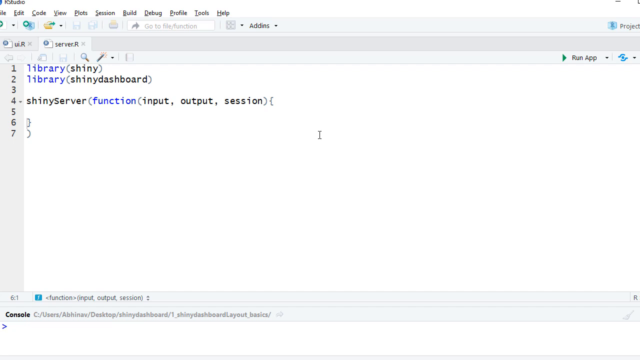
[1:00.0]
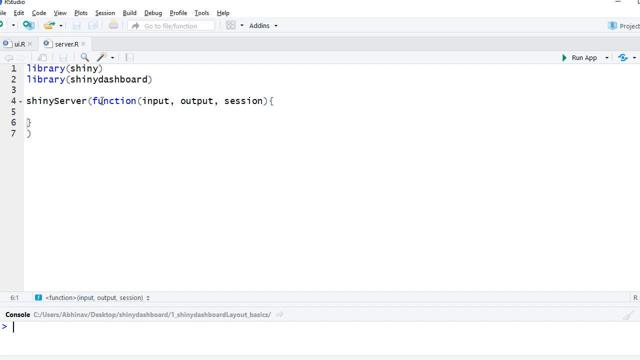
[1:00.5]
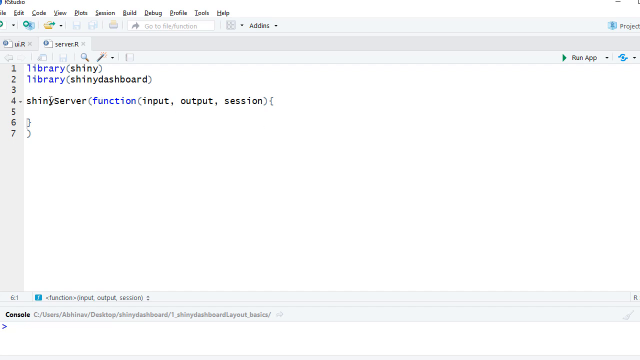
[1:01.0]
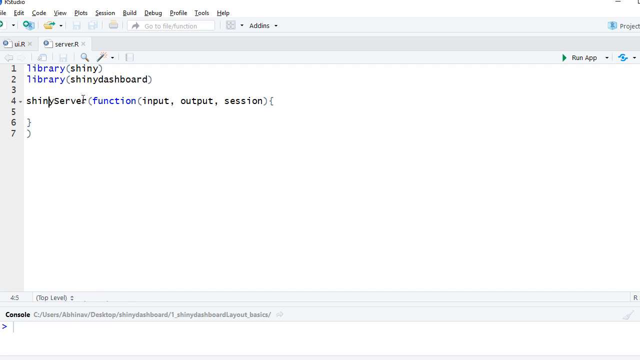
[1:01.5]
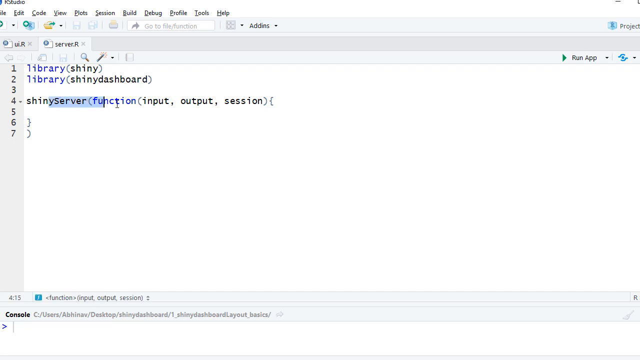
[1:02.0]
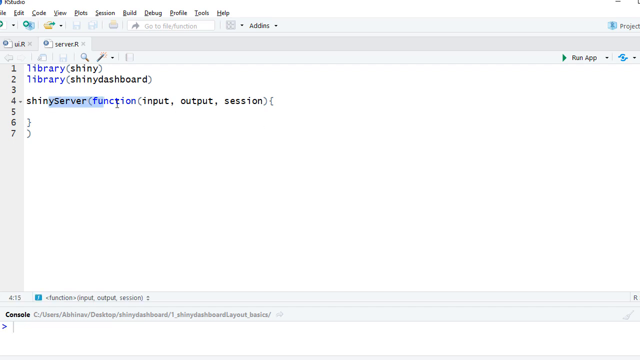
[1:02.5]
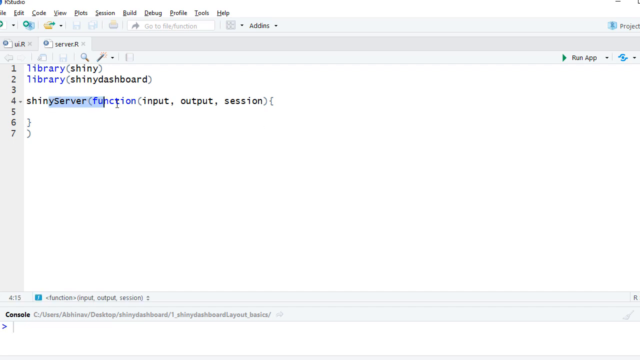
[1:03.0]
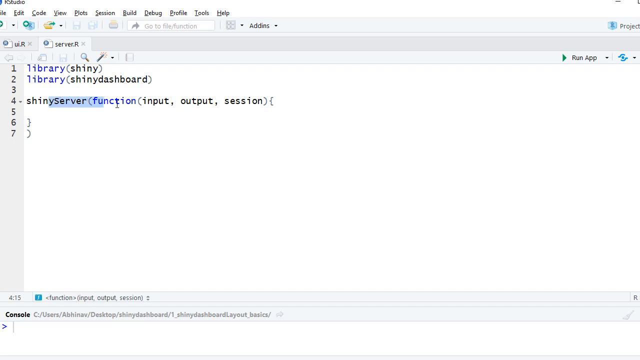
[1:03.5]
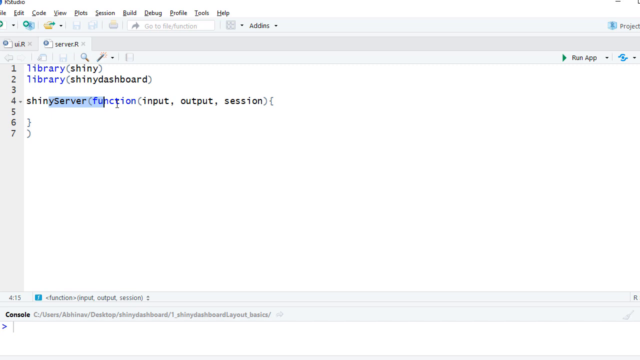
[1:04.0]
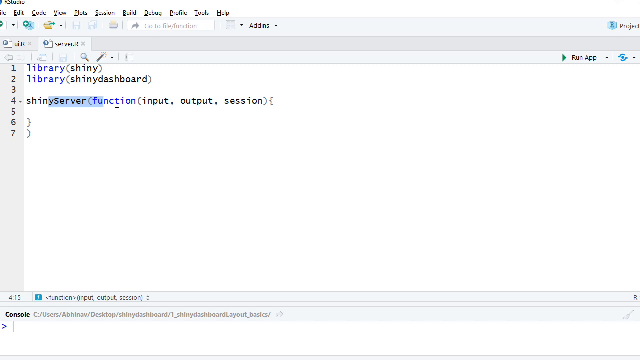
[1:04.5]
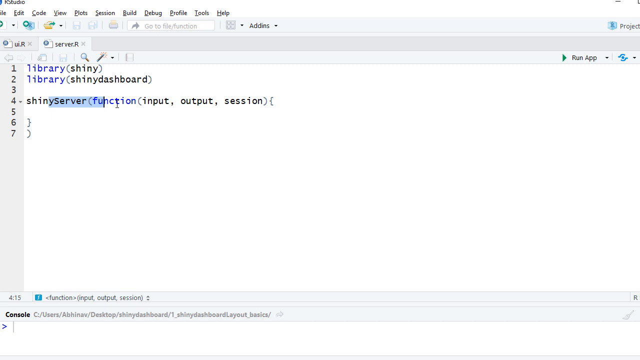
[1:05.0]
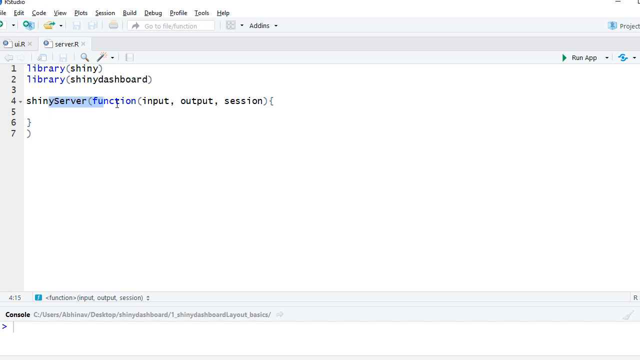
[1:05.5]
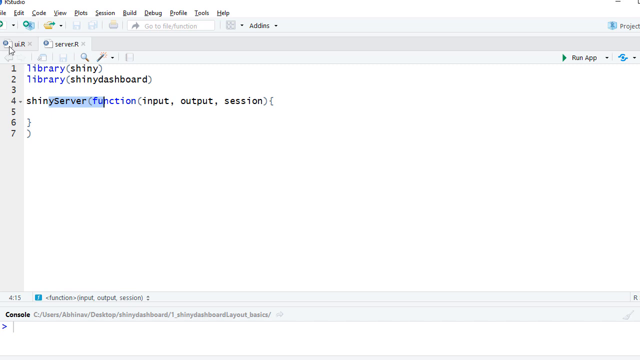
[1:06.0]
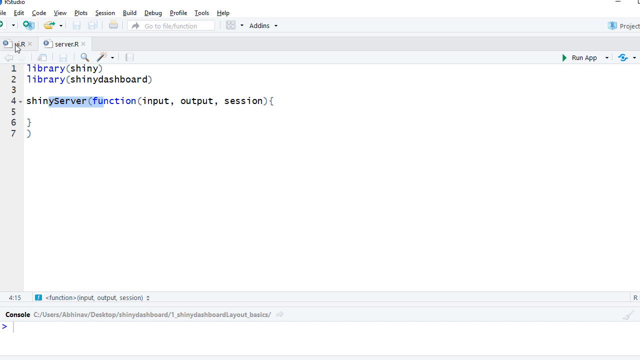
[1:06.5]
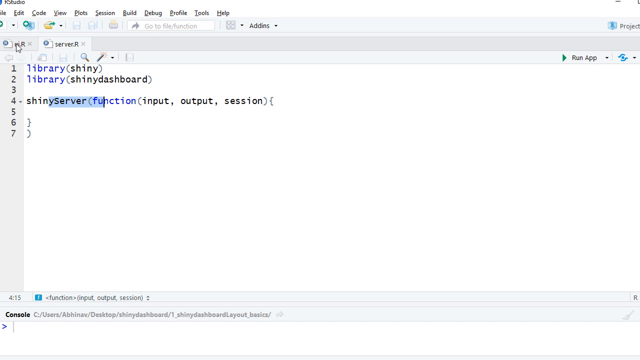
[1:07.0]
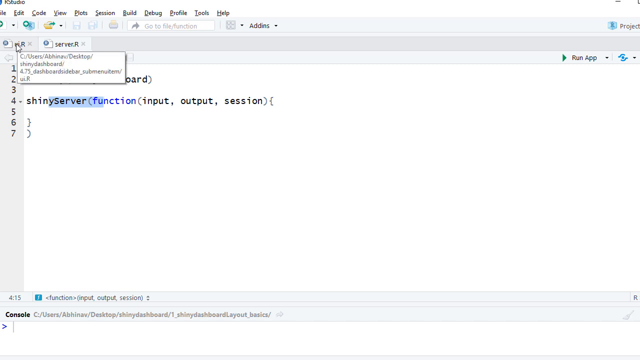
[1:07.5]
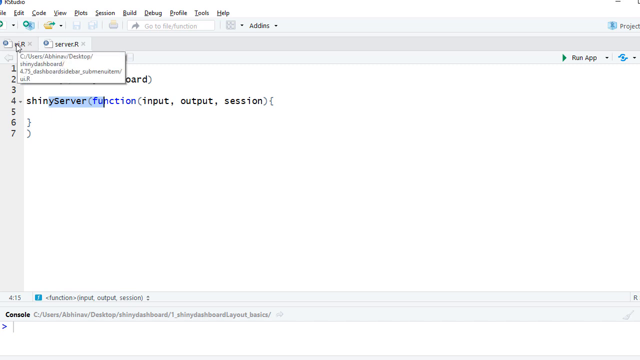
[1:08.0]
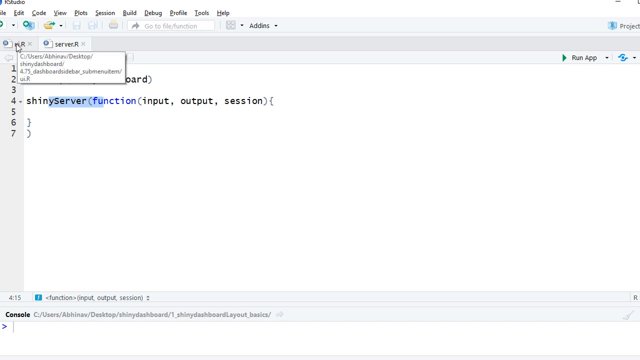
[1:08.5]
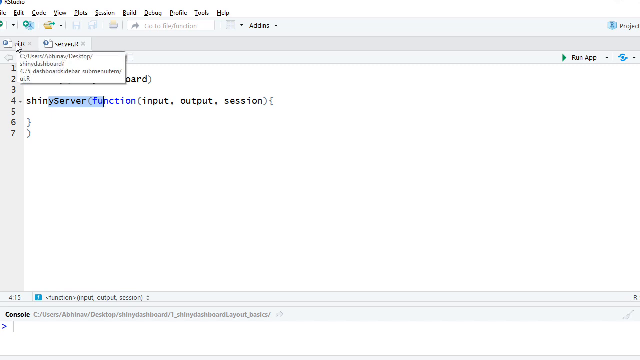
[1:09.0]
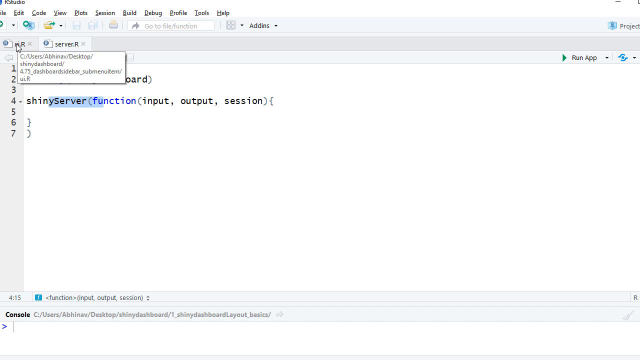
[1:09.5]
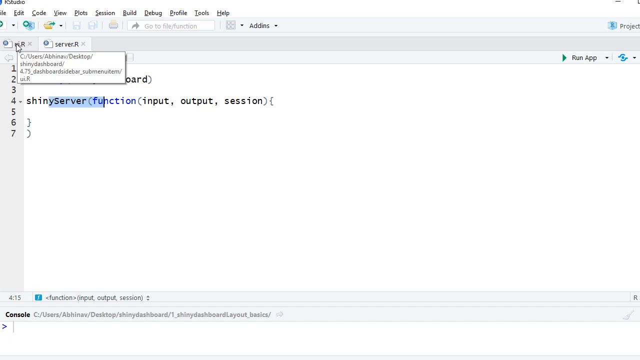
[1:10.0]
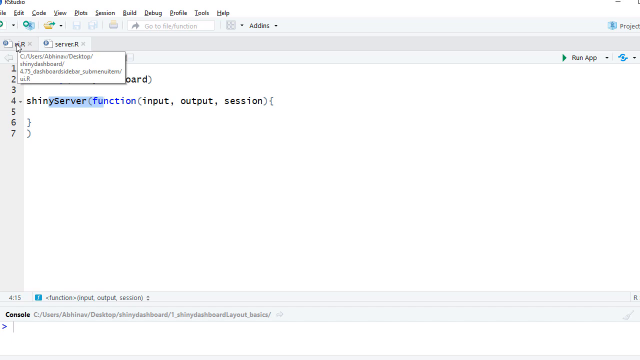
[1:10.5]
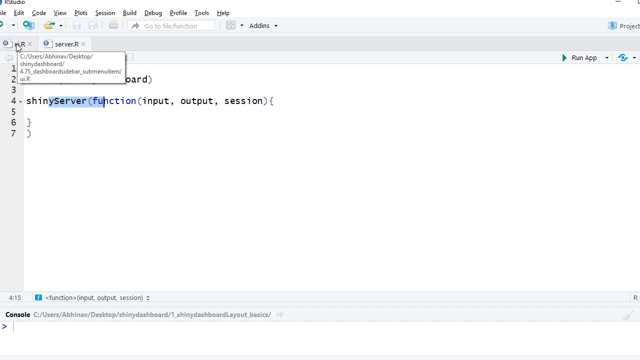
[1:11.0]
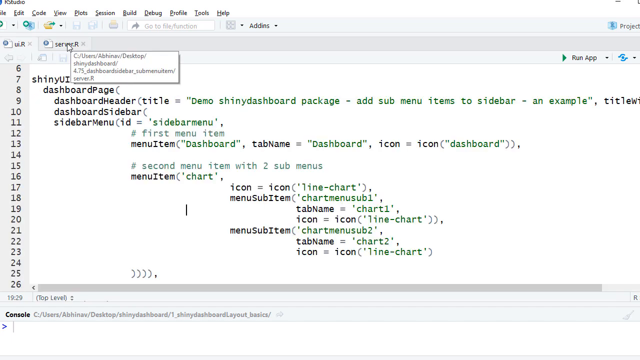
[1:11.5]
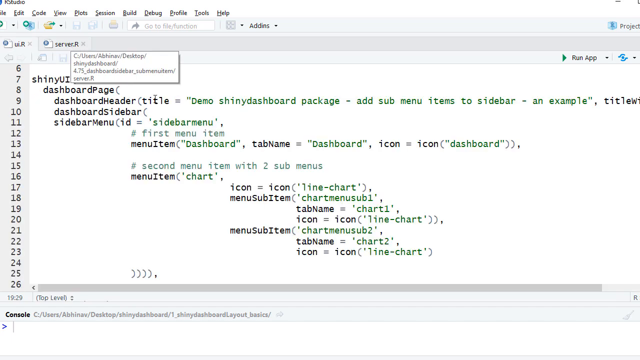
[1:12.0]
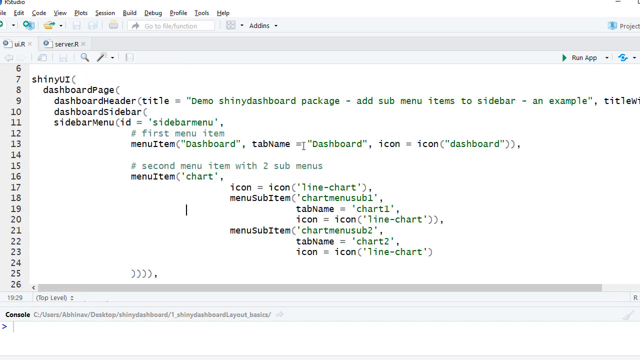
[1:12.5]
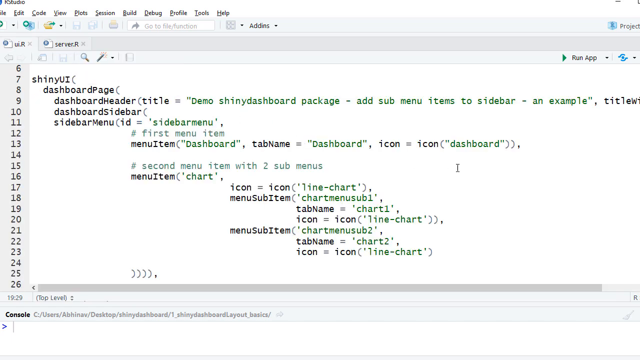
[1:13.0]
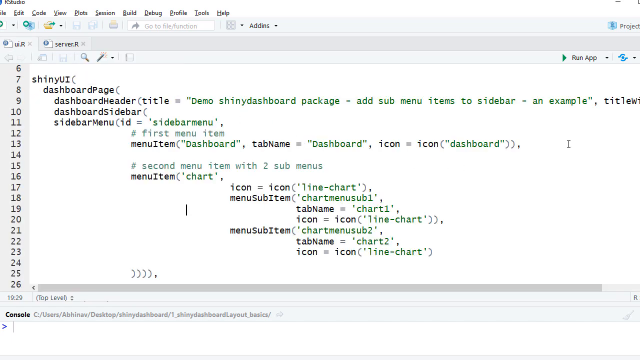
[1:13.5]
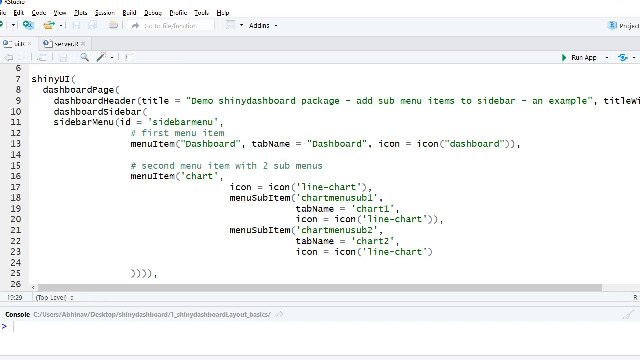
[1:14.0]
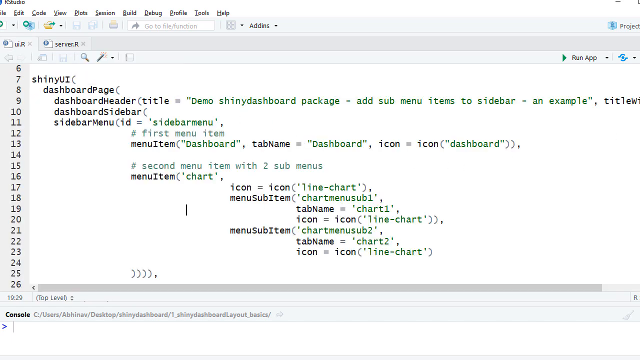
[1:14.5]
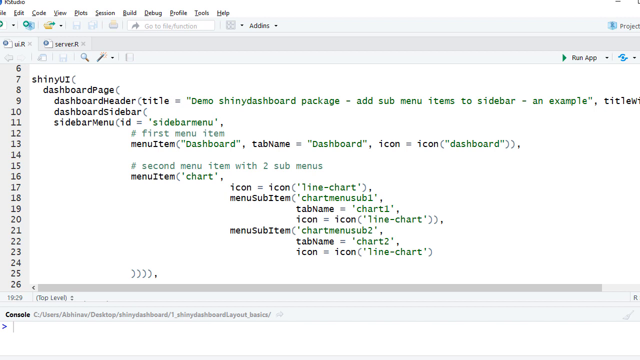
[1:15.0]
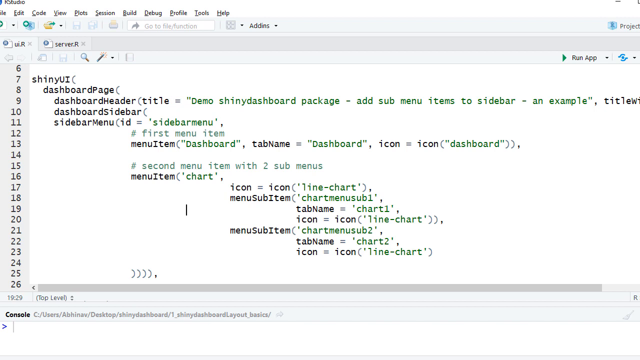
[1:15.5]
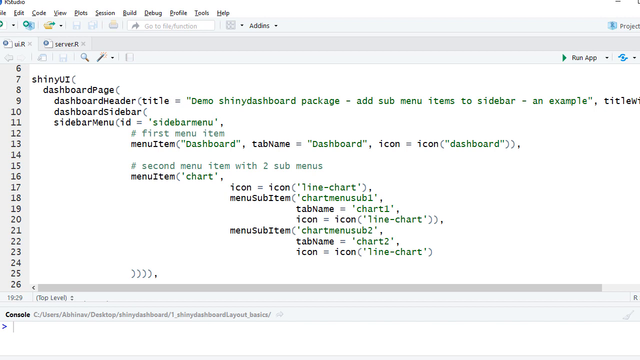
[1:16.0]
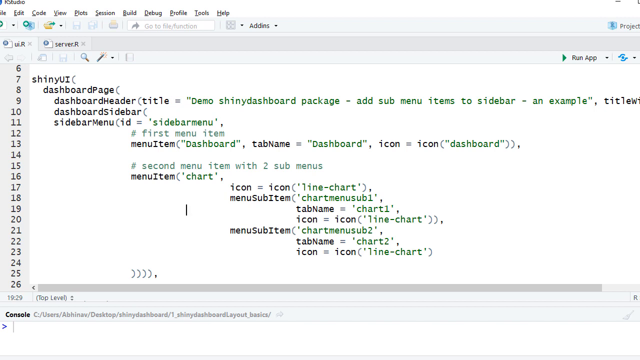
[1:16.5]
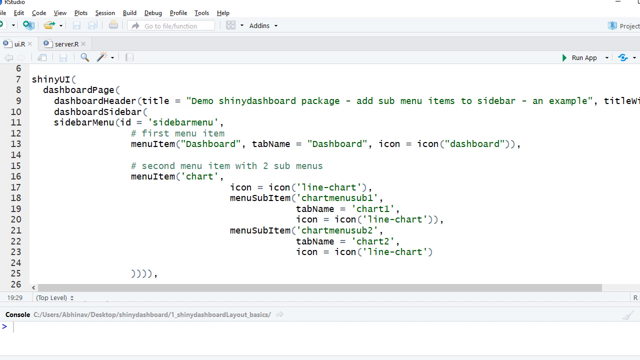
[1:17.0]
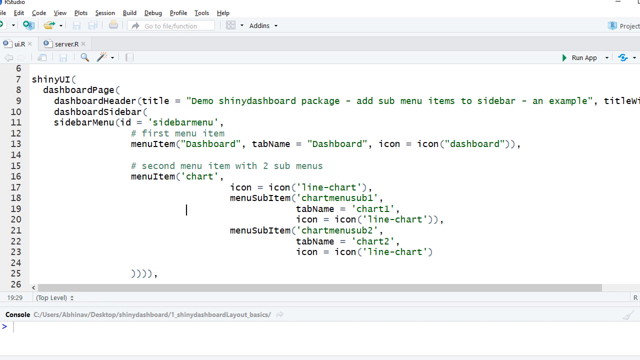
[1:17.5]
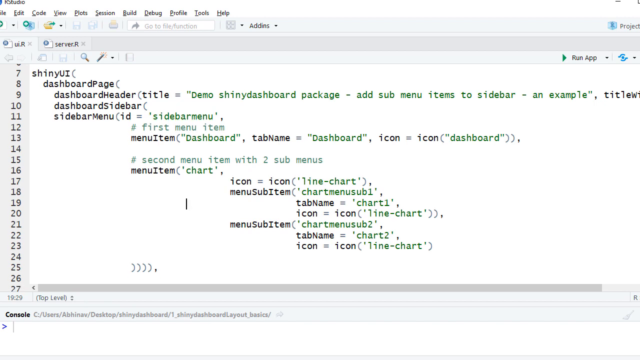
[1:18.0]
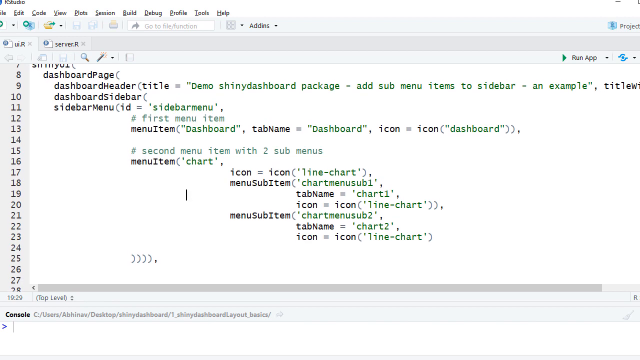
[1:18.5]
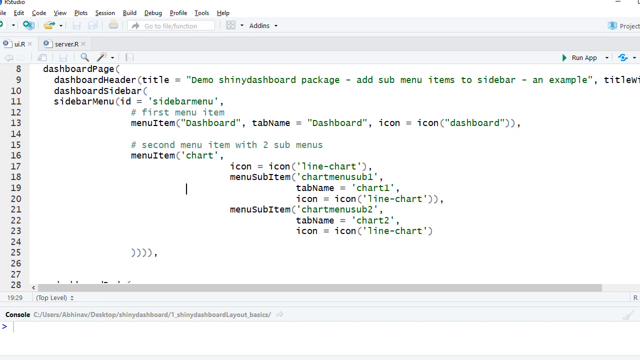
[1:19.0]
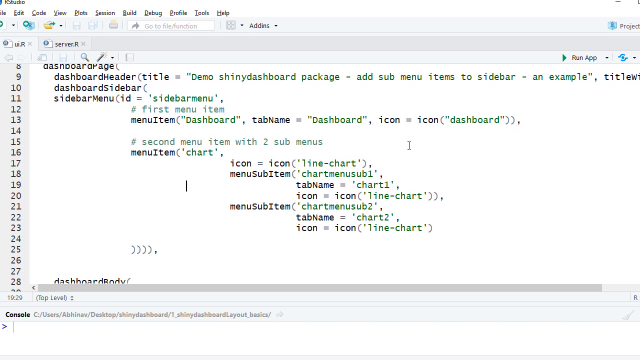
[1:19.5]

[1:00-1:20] The screen with lines 1 through 7 on a big white background is shown, with computer tabs such as file and edit along the very top. Line 1 has "library" in blue and "shiny" in black in parentheses. Line 2 has "library" in blue and "shiny dashboard" in black in parentheses. Line 3 is blank. Line 4 has black text, a portion highlighted in blue ending in "server," then "function" in blue lettering in parentheses, and "input output in session" in black lettering in parentheses. Lines 5, 6 and 7 are blank. This is the last screen that comes up in this portion.